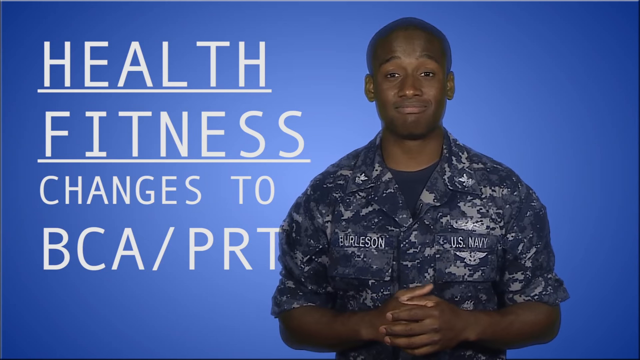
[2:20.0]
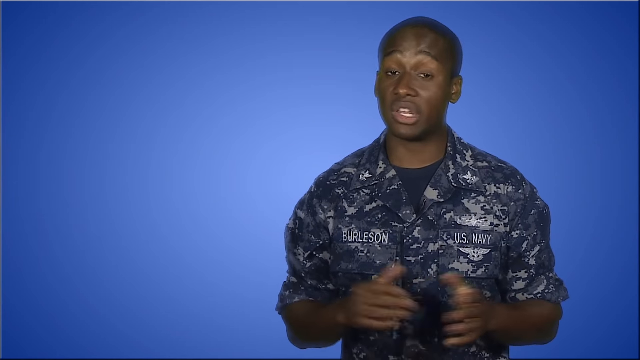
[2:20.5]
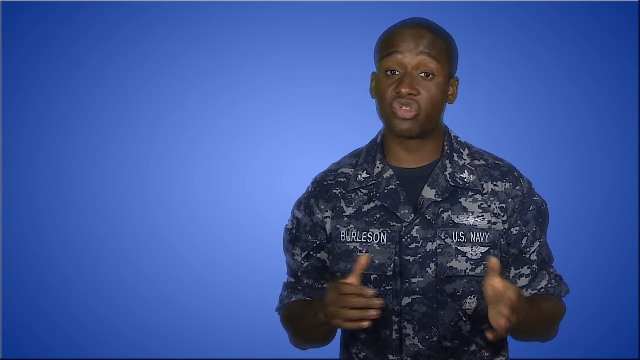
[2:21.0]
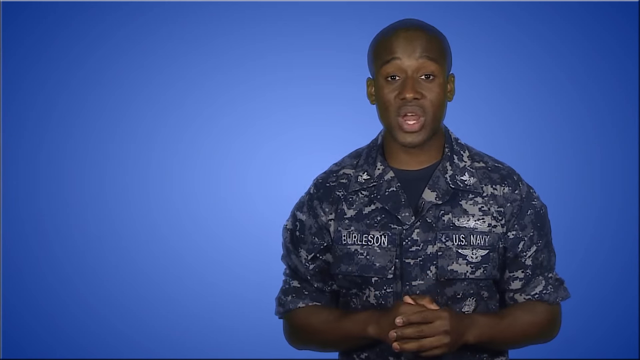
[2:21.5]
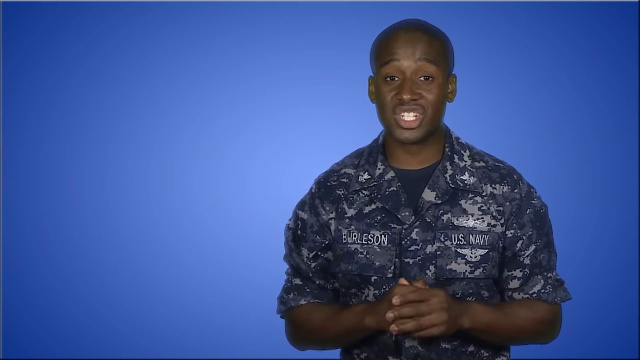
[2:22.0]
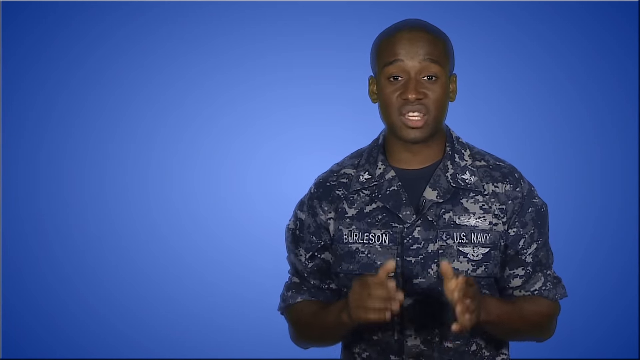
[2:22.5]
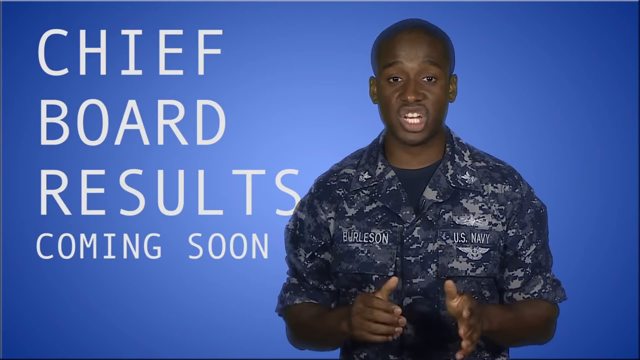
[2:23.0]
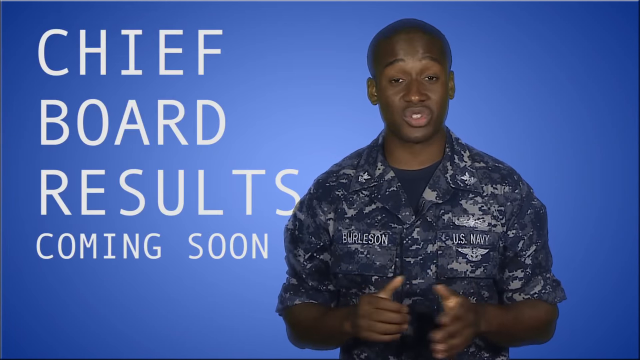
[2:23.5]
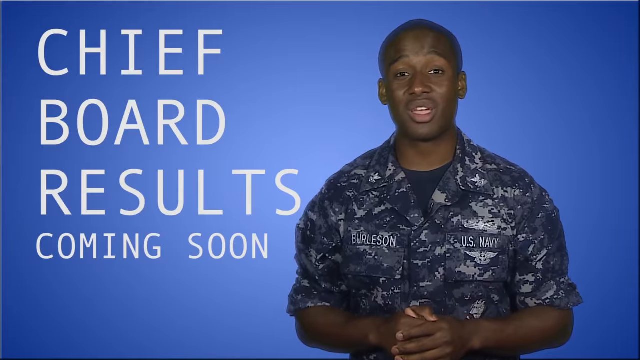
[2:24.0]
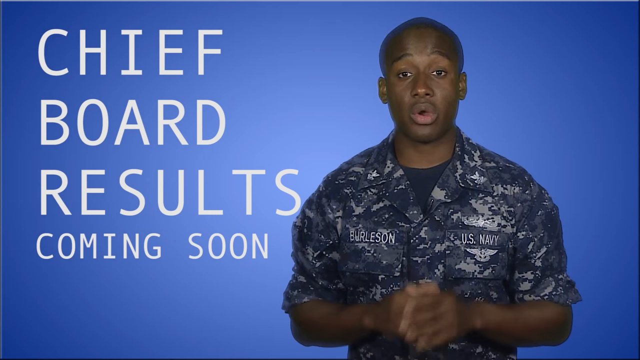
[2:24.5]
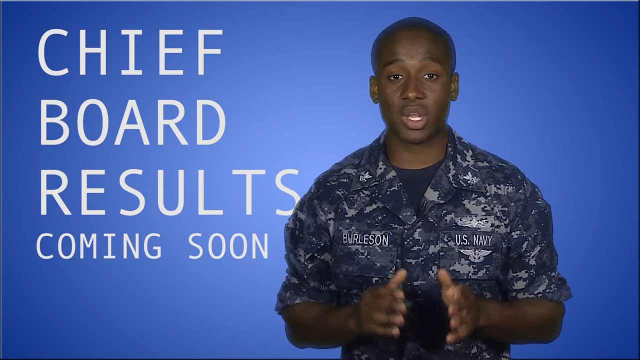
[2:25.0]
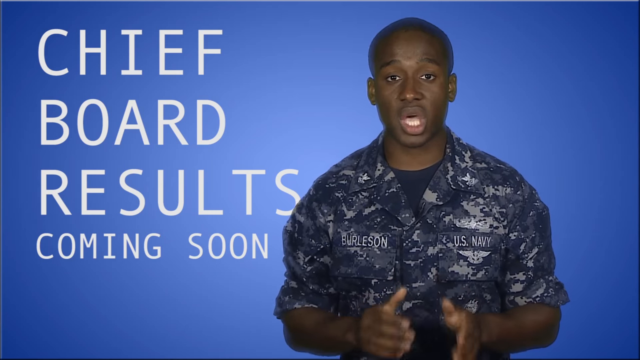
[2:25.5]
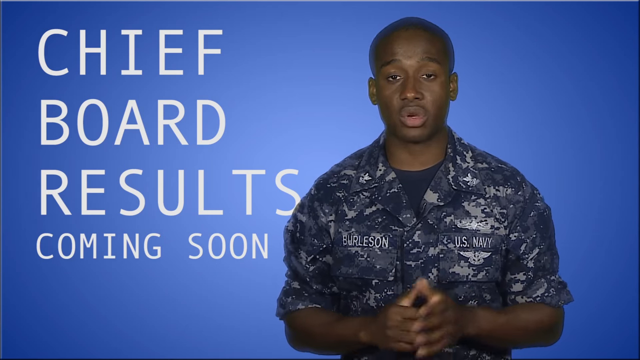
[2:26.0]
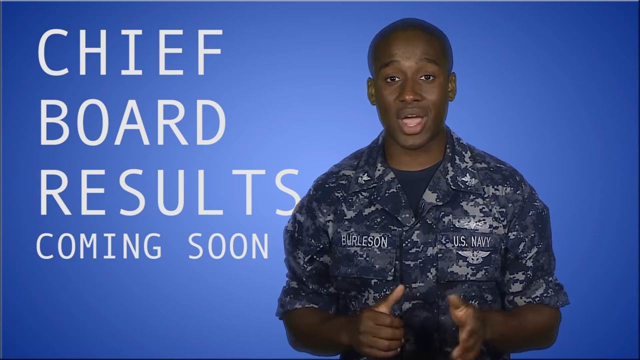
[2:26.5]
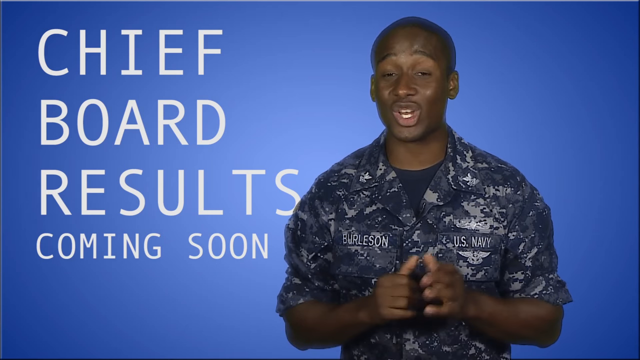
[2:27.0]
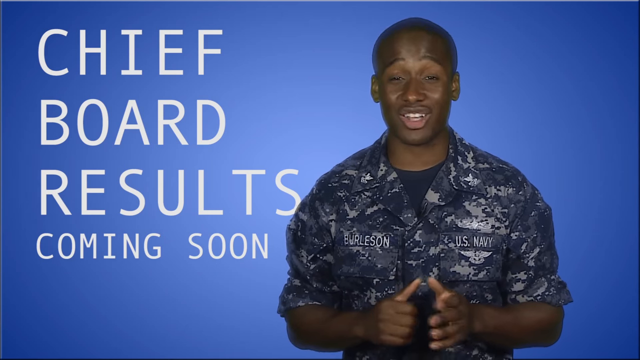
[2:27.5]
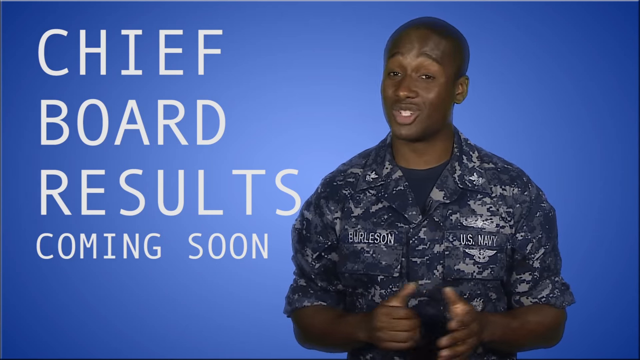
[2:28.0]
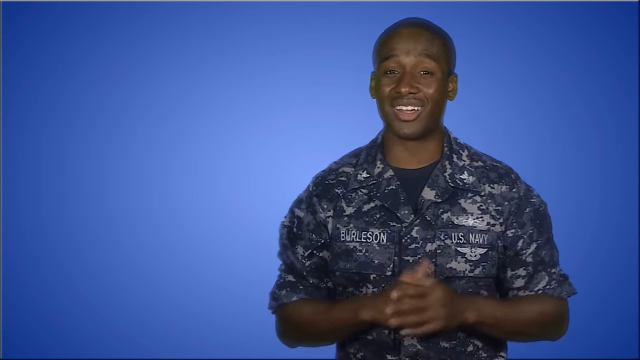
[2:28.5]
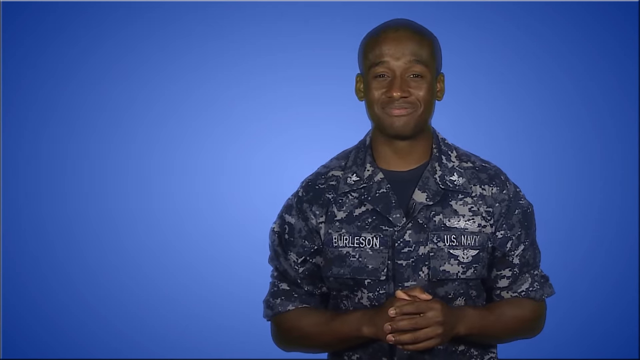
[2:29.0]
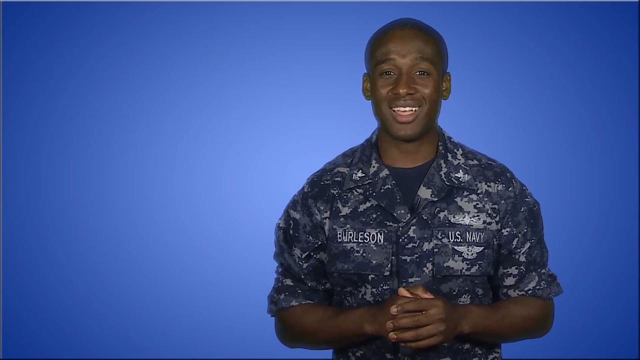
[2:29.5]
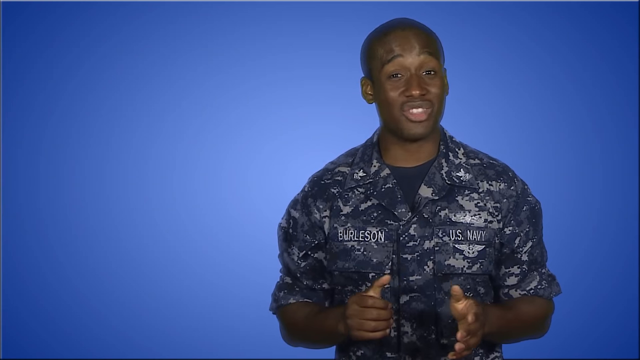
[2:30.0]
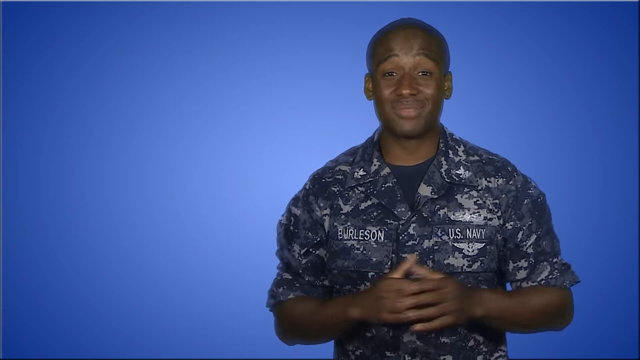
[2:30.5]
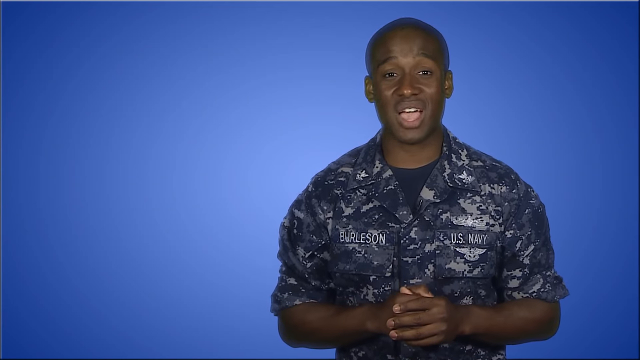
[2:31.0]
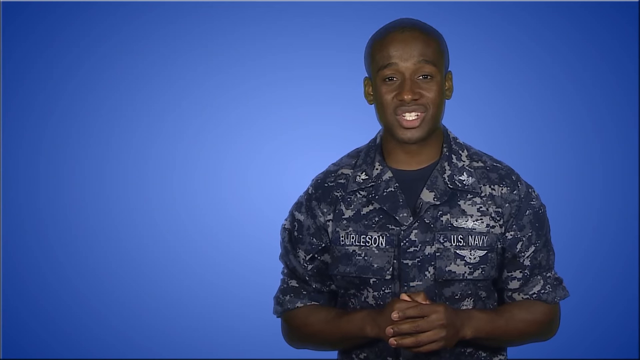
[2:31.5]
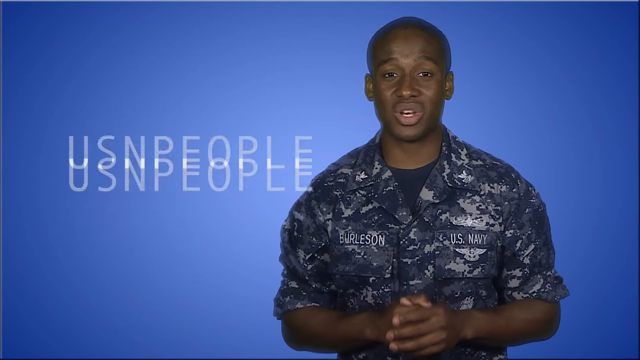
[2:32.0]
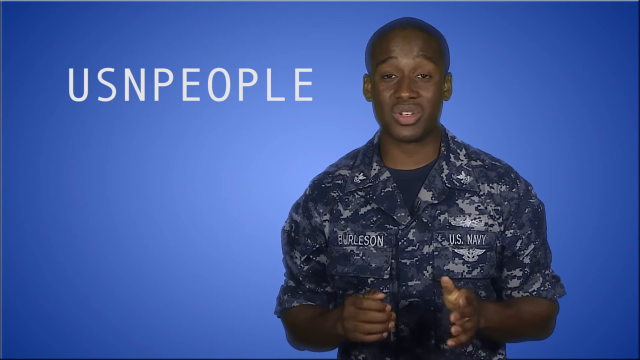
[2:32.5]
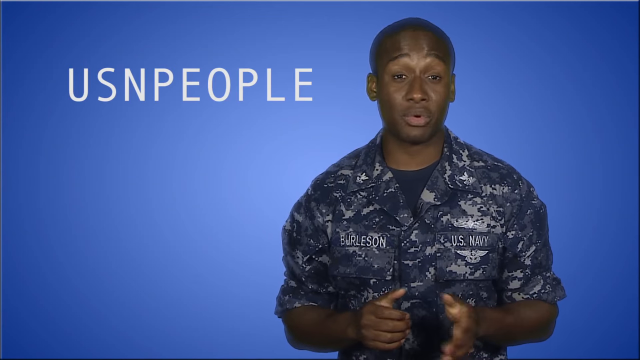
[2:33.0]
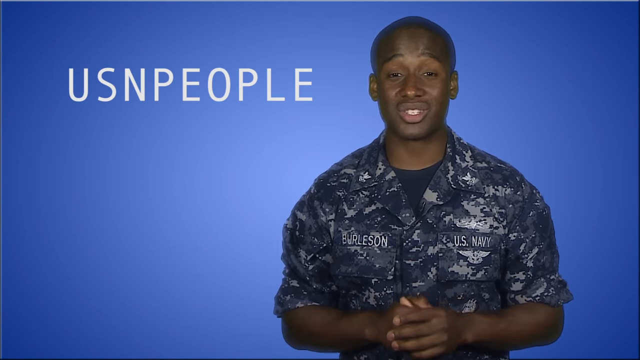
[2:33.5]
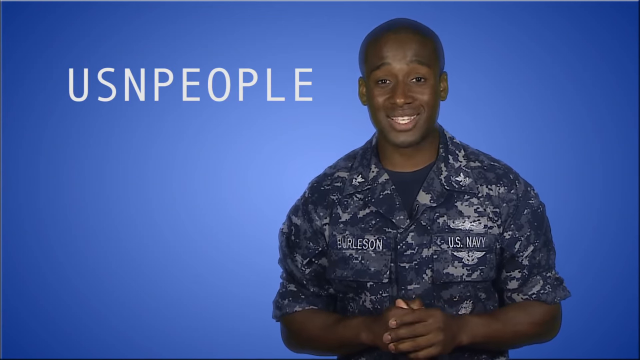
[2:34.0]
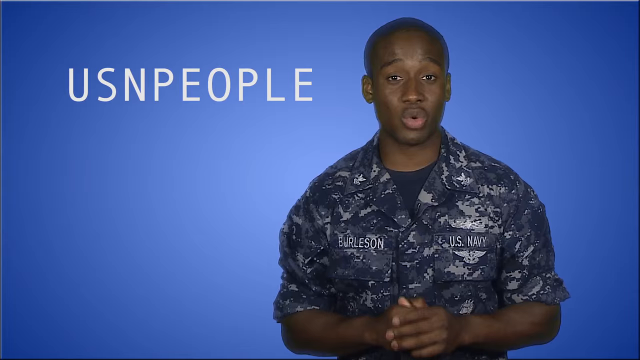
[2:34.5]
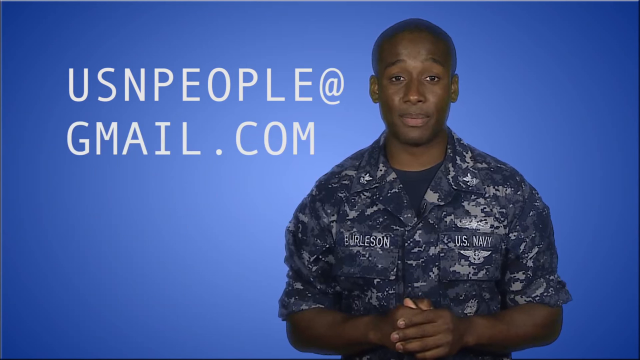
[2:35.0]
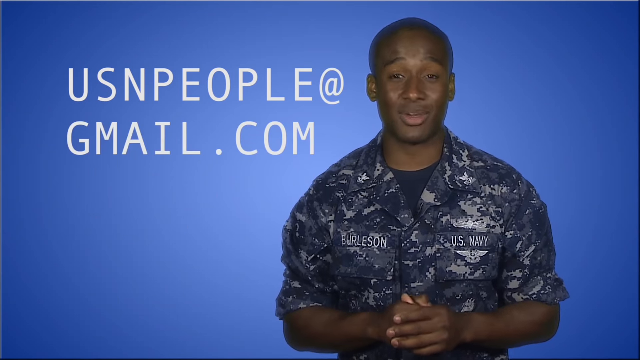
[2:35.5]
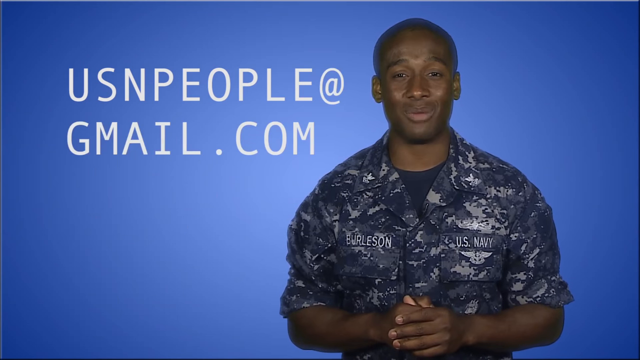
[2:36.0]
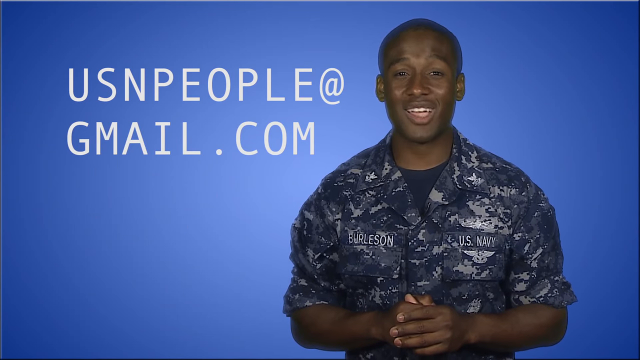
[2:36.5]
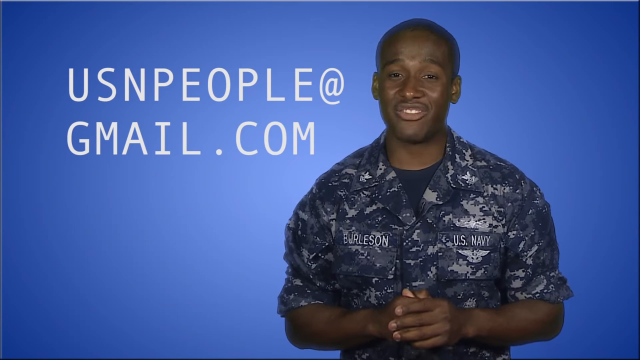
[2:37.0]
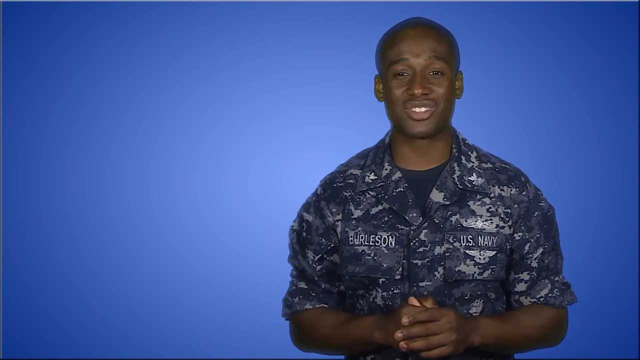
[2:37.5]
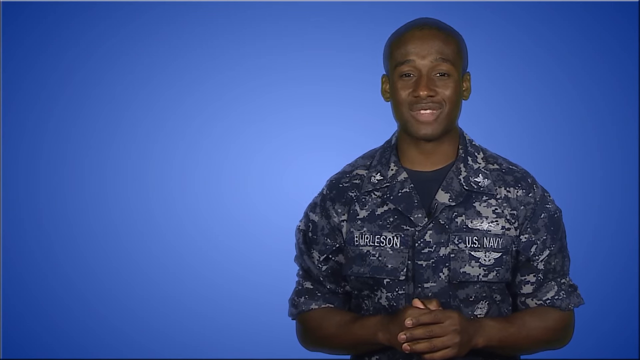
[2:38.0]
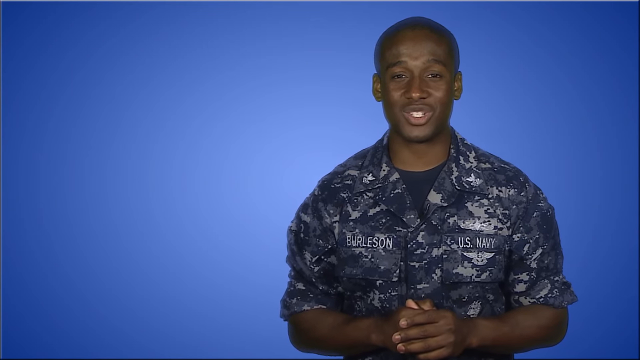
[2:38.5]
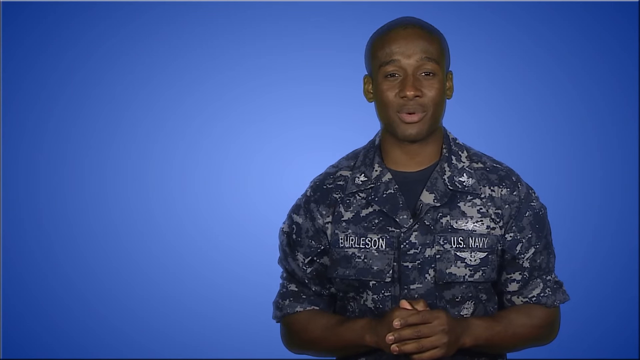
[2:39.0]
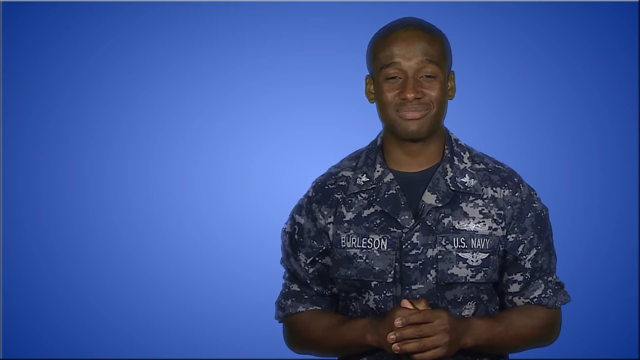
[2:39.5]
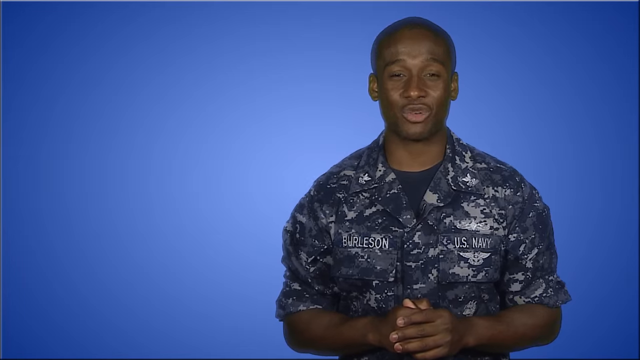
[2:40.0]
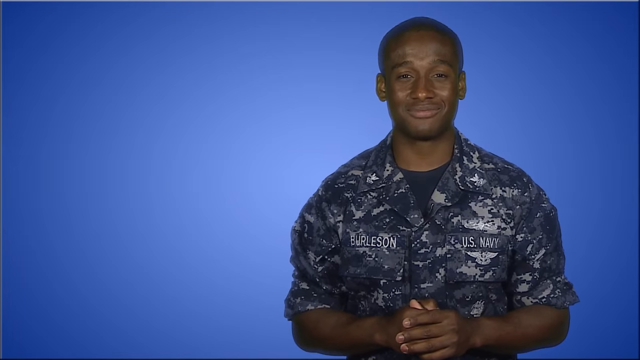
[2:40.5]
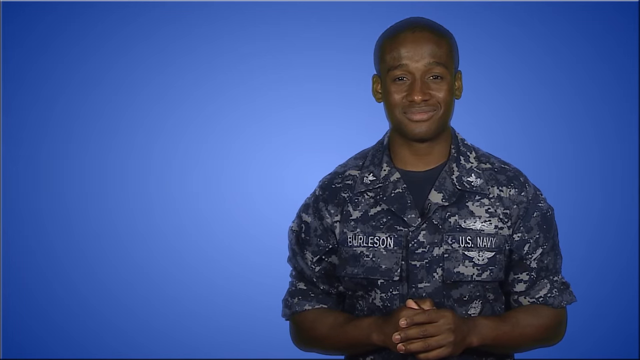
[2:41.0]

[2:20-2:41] Against a blue background, standing in the middle but somewhat to the right, Officer Burleson of the US Navy wears black, gray and white fatigues and is seen from the stomach up. On the left side of the screen, large white letters read "health fitness changes to BCA / PRT"; the text disappears as he continues to talk. More text appears reading "chief board results coming soon," then slides off the screen after a few seconds while he speaks. White text then pops up giving an email address: "usnpeople@gmail.com." The man seems to be closing up his presentation.